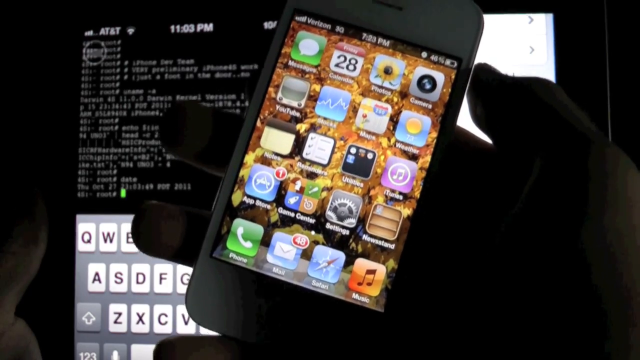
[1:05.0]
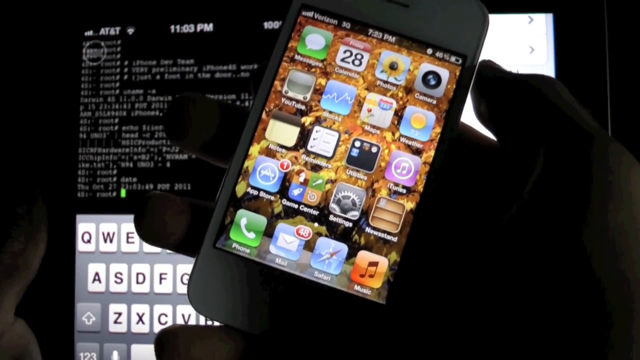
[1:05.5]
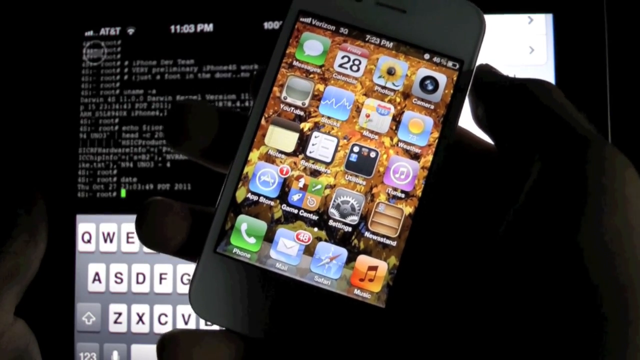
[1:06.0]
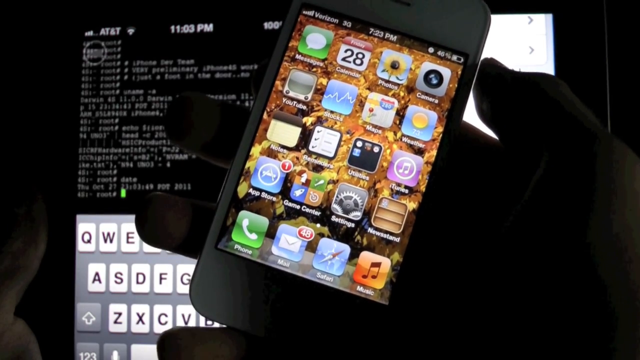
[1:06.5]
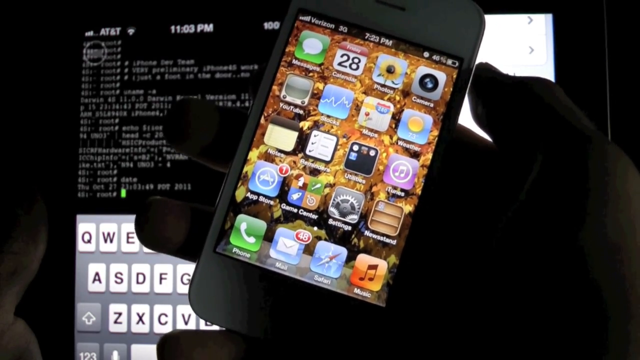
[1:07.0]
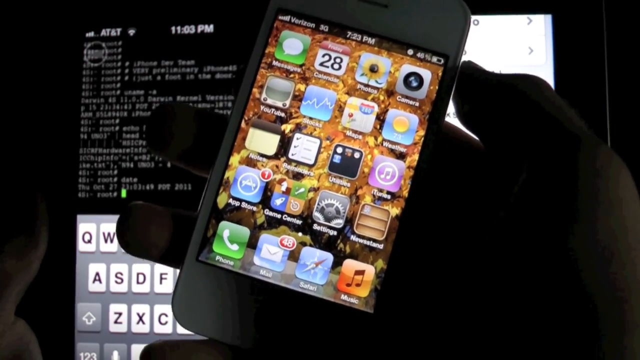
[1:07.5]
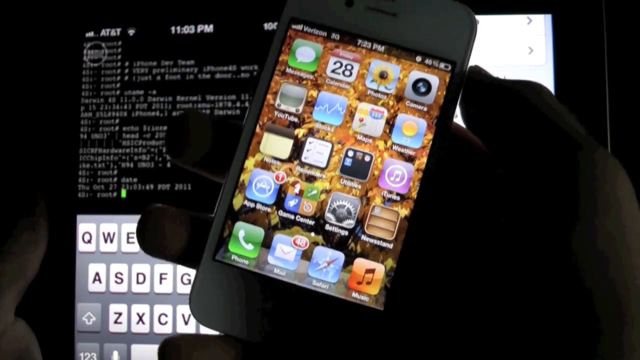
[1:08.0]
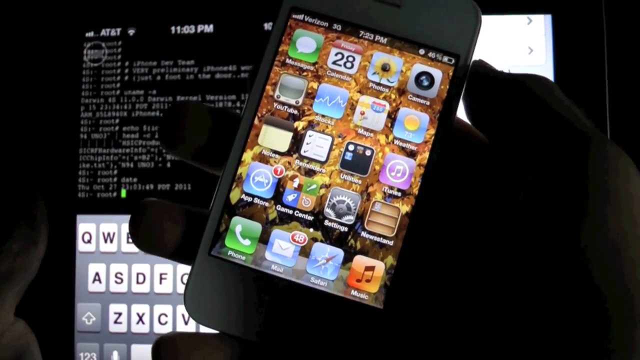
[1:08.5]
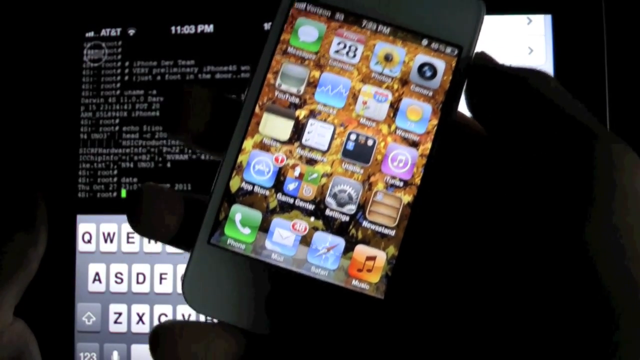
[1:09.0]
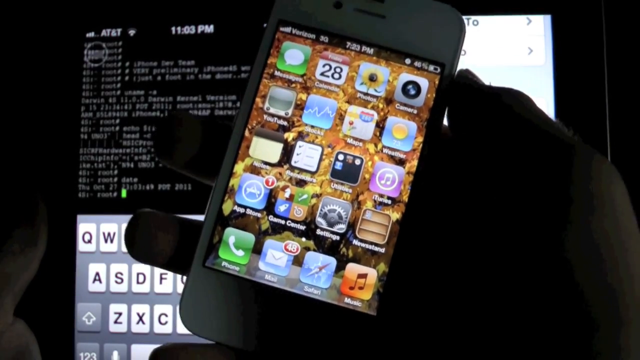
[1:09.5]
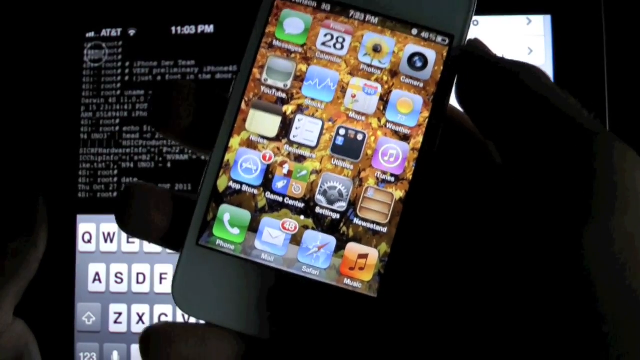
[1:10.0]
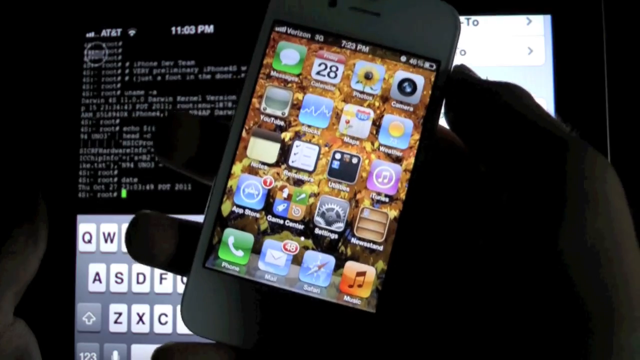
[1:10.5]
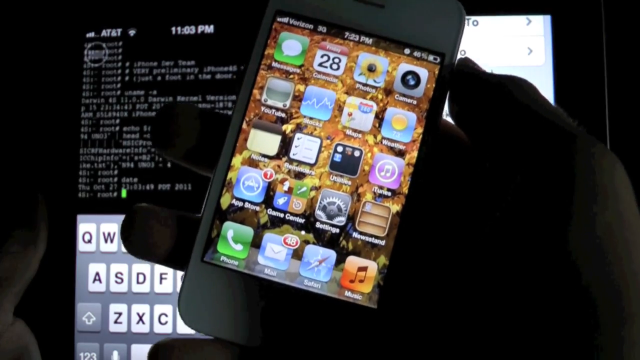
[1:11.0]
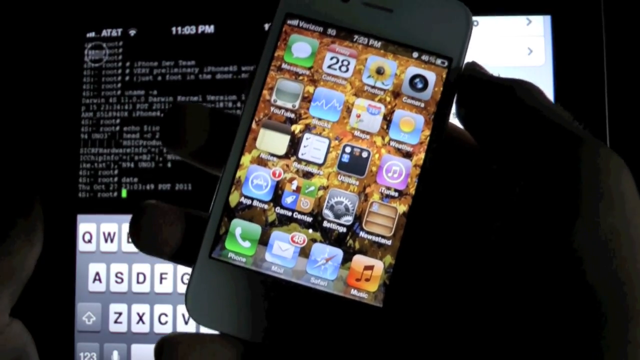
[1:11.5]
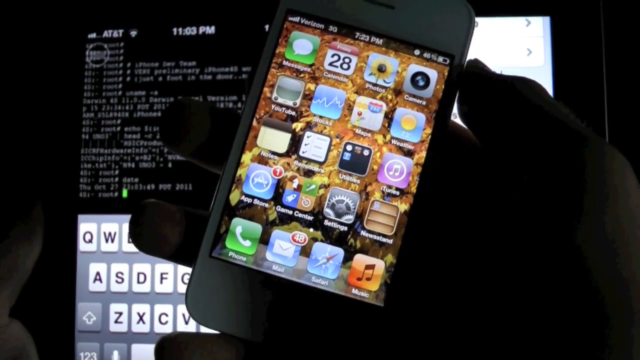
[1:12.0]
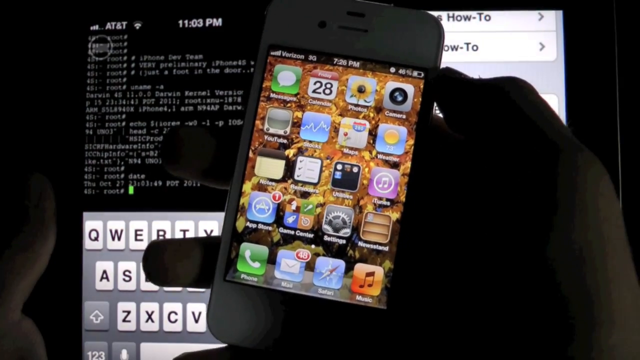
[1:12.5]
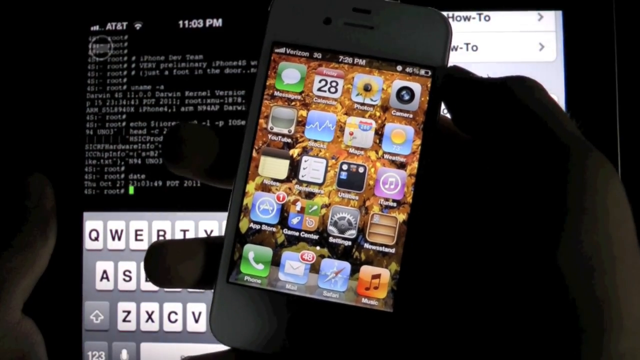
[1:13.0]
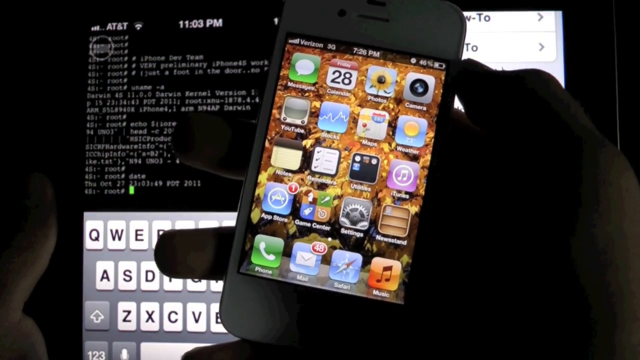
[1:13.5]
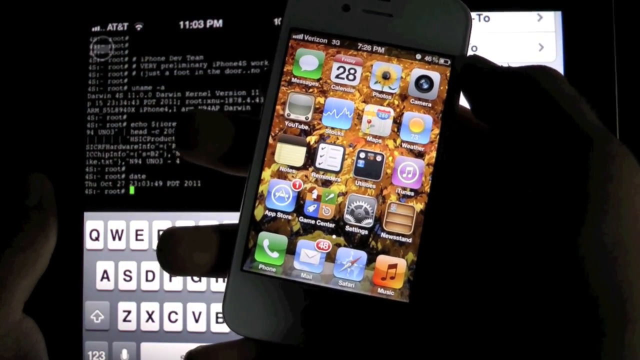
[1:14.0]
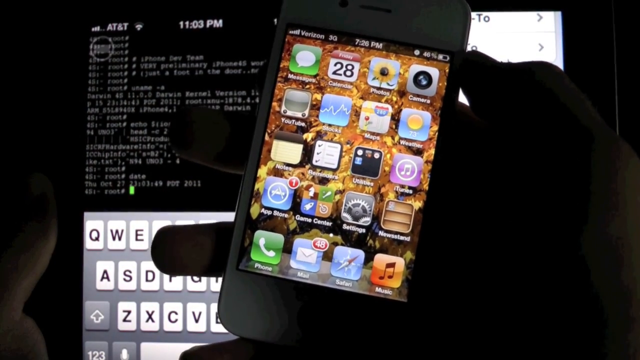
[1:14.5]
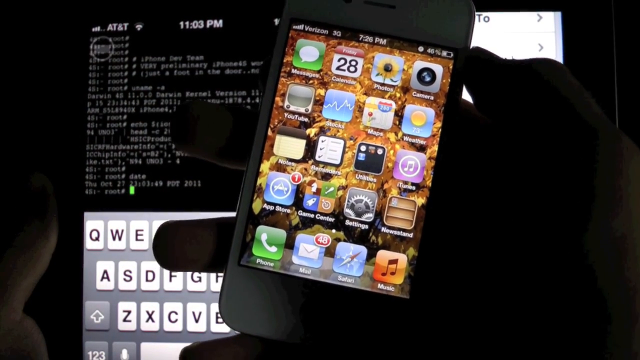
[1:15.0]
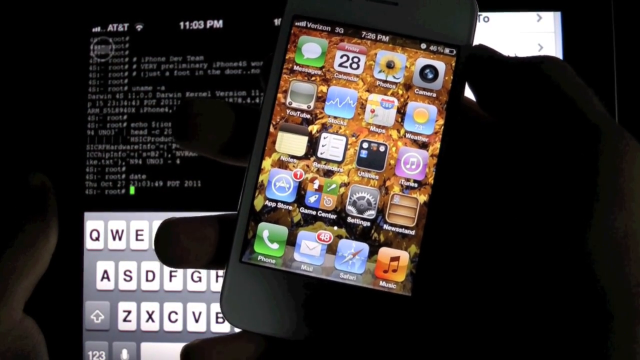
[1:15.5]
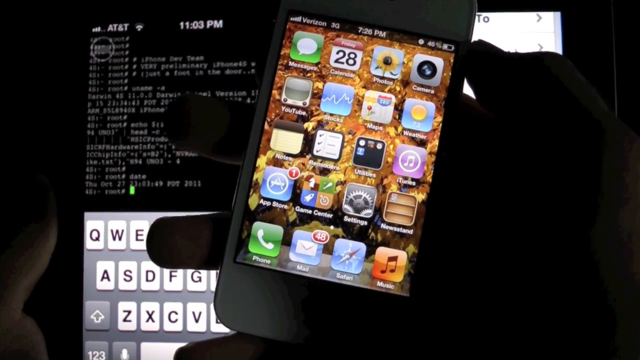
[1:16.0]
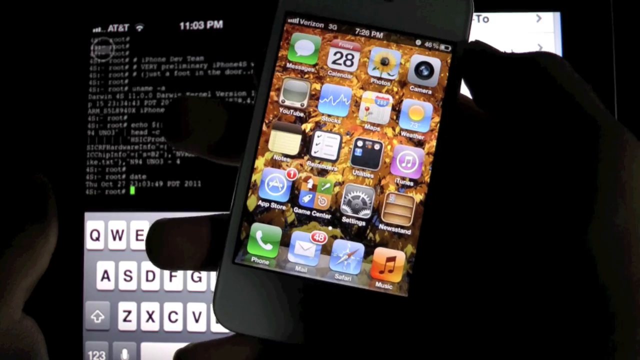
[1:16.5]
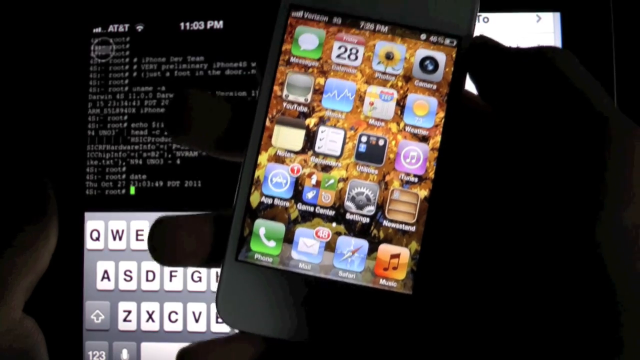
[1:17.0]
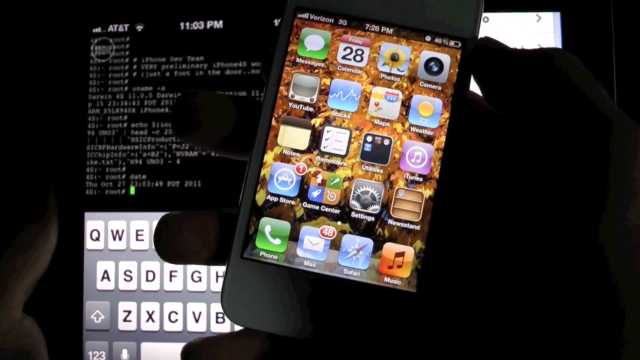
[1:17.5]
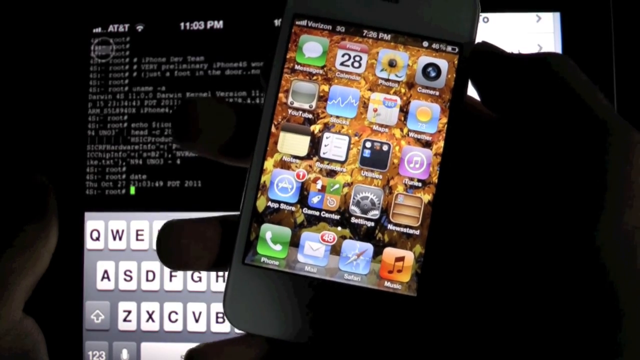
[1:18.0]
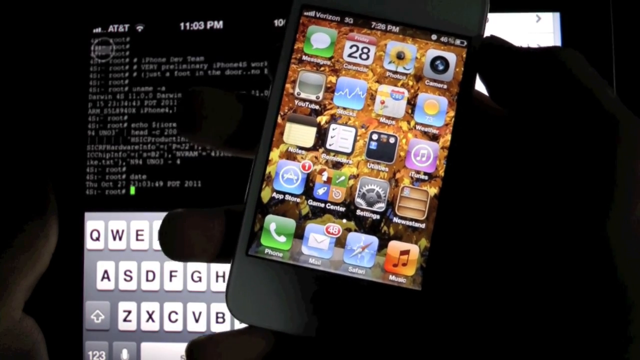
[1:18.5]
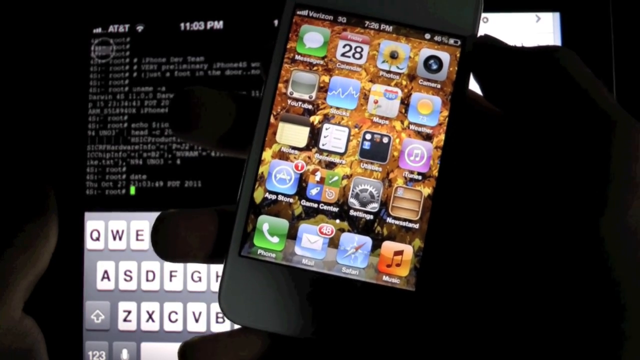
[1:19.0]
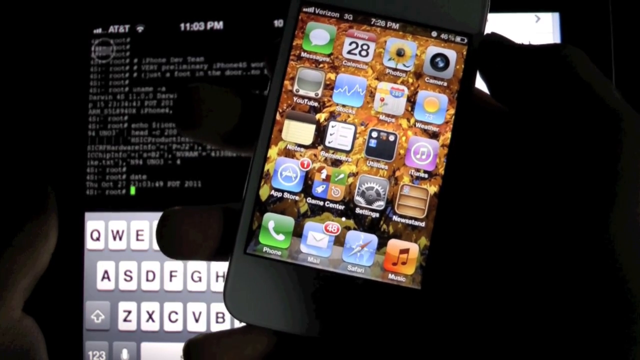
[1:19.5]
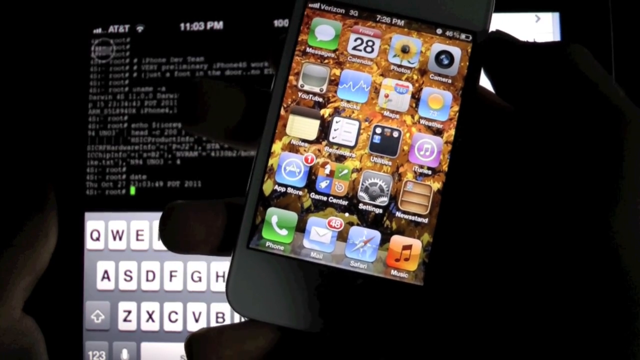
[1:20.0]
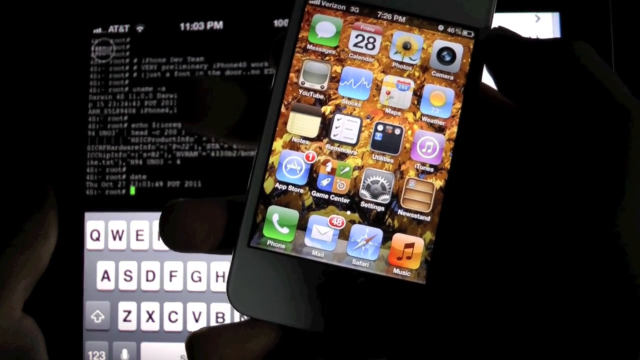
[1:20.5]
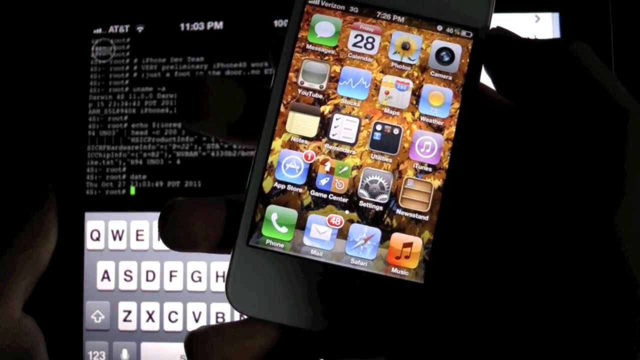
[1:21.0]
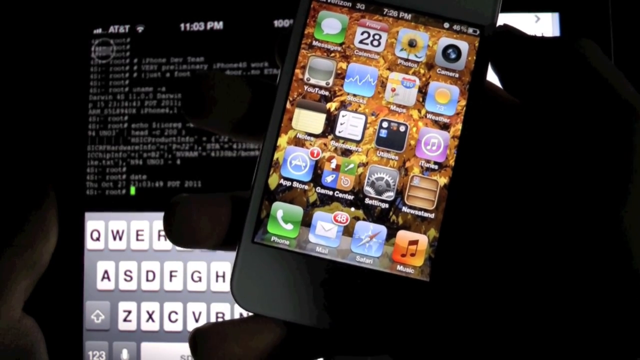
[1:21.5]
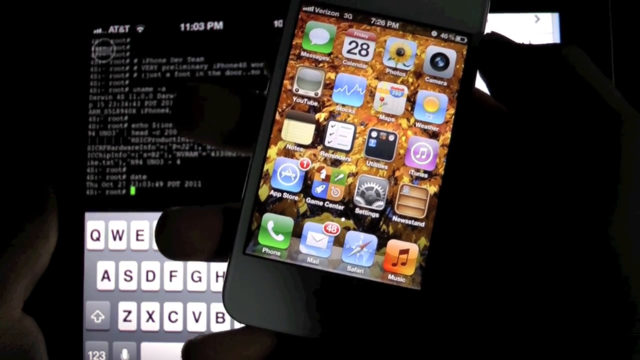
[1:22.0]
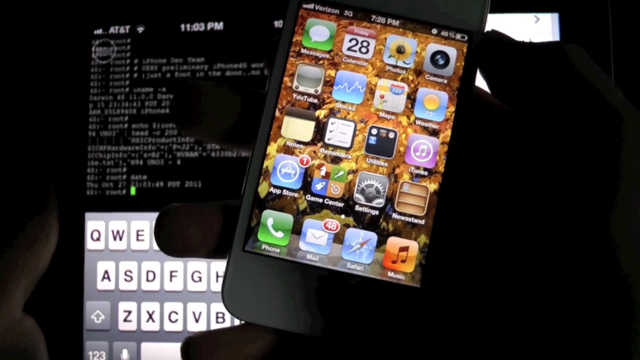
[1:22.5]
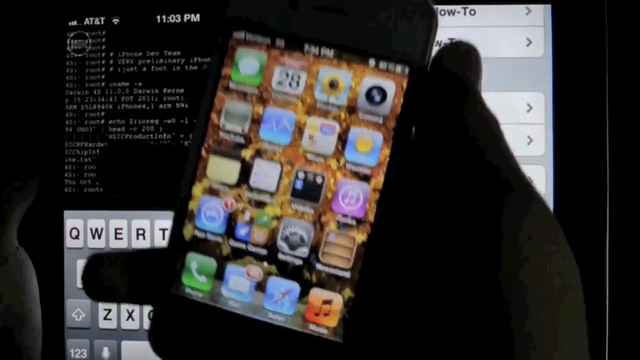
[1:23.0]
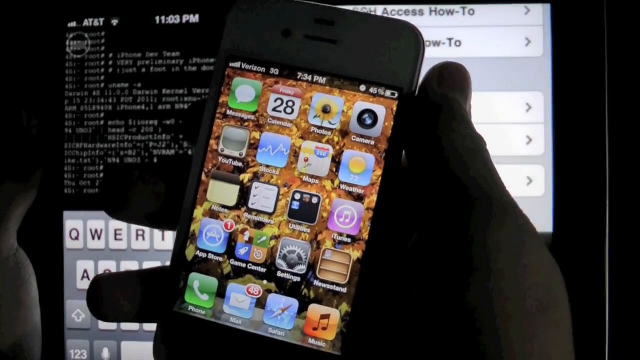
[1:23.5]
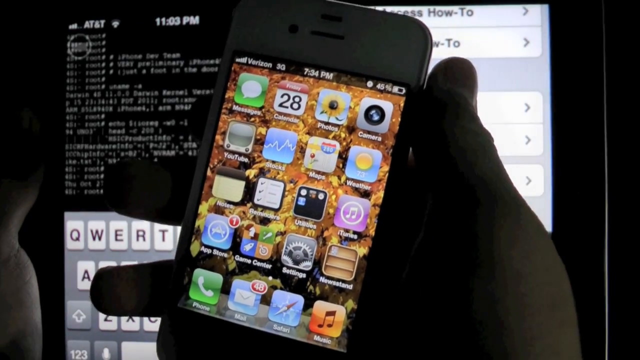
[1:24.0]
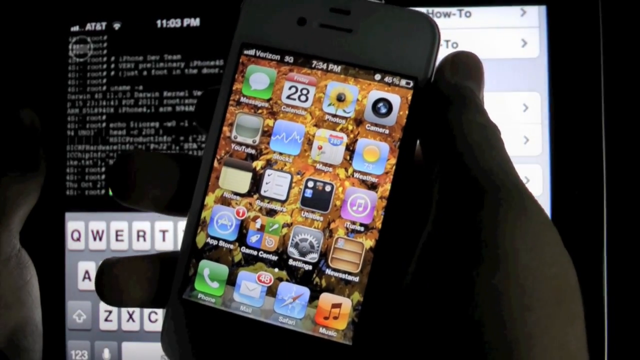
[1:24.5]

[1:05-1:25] He continues holding his phone and talking. The device on the left still shows 11.03pm, so it appears to be a screenshot rather than a live phone. The phone he is holding shows 7.26pm. The time on the held phone changes across jump cuts, going from 7.23 to 7.26 and then to 7.34. Its battery looks to be around 40%, and the date reads Friday the 28th, with no month shown.